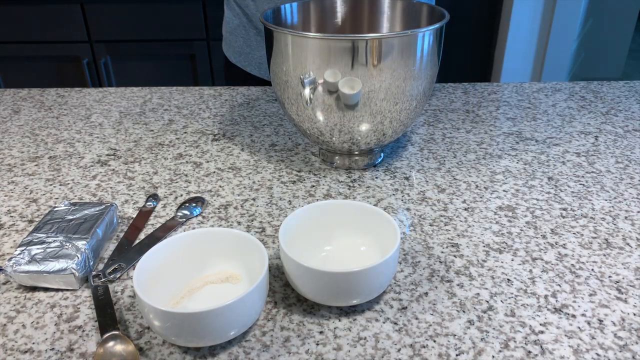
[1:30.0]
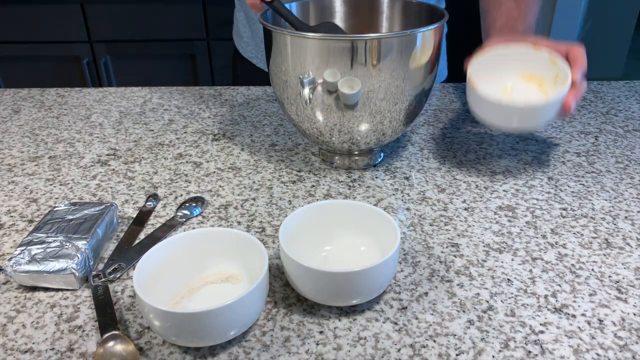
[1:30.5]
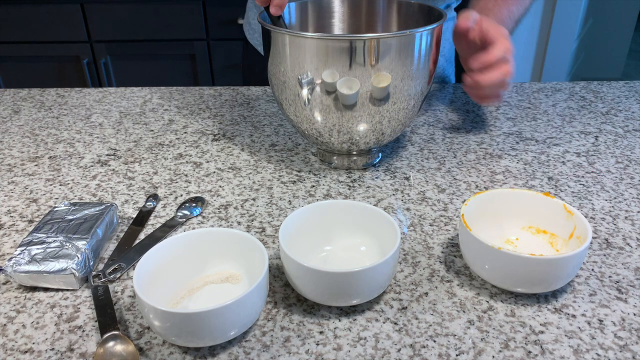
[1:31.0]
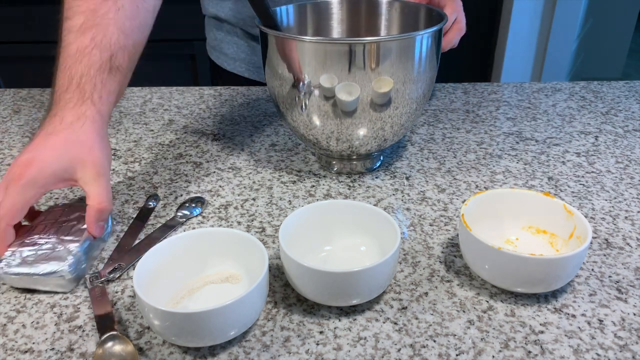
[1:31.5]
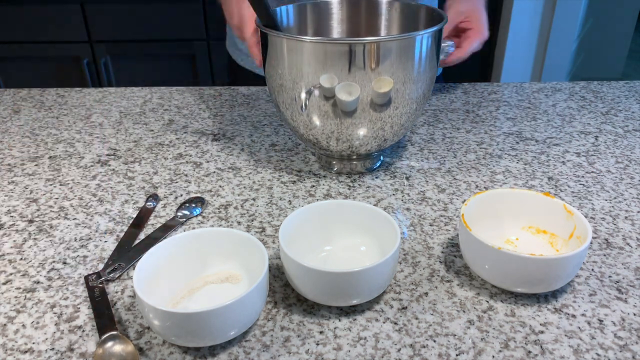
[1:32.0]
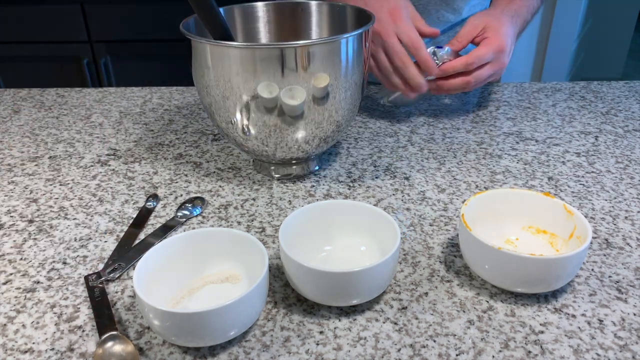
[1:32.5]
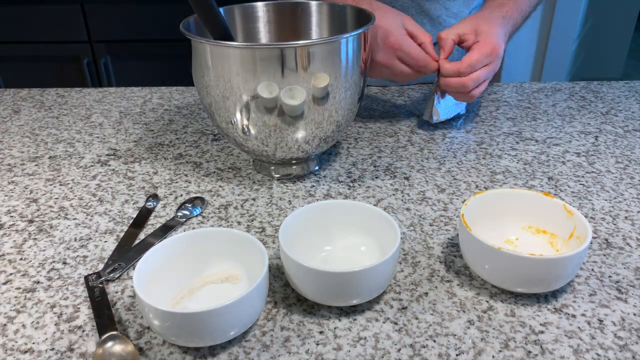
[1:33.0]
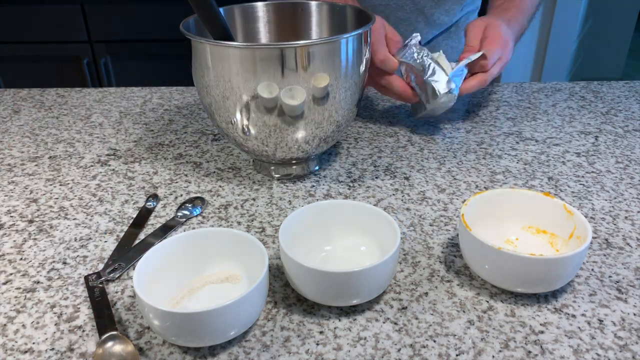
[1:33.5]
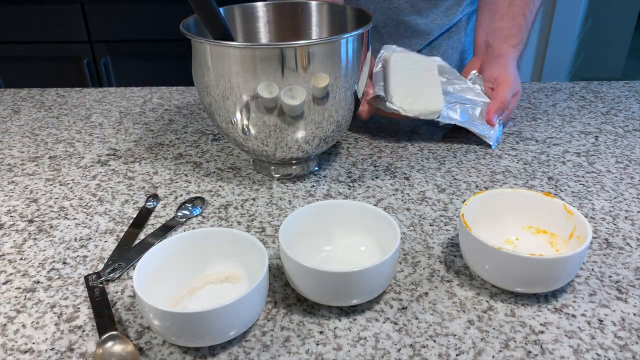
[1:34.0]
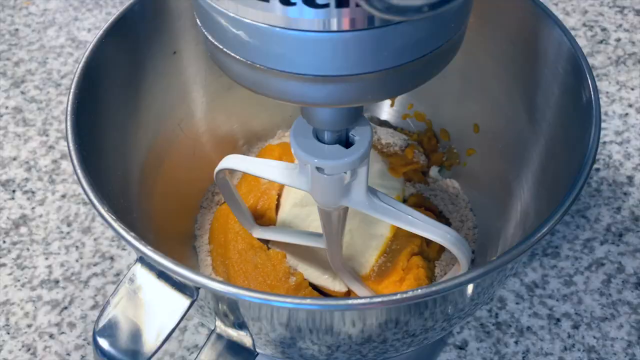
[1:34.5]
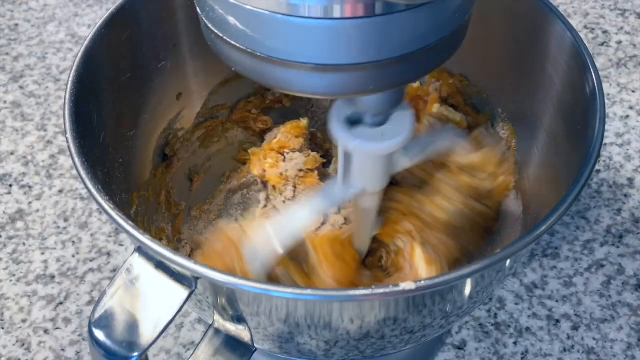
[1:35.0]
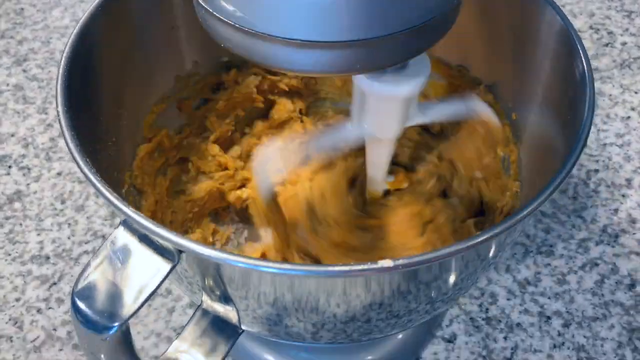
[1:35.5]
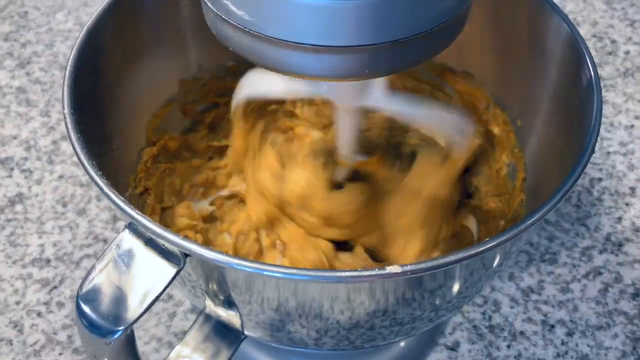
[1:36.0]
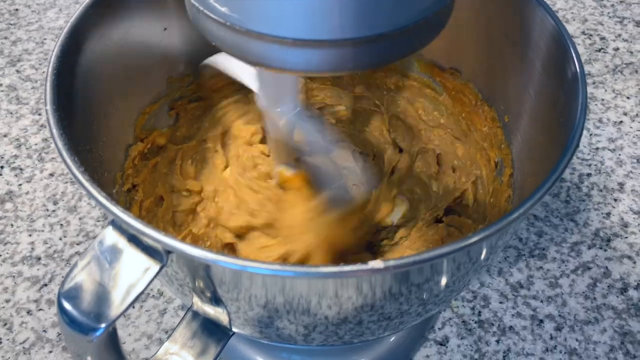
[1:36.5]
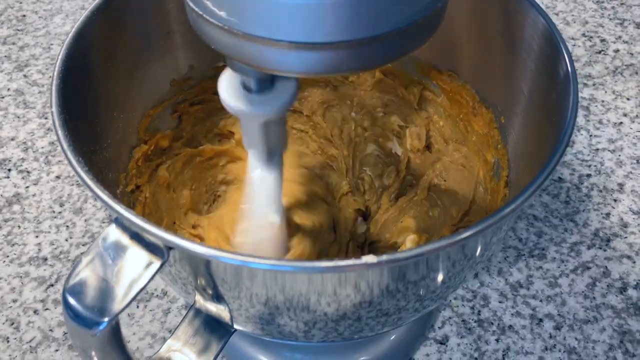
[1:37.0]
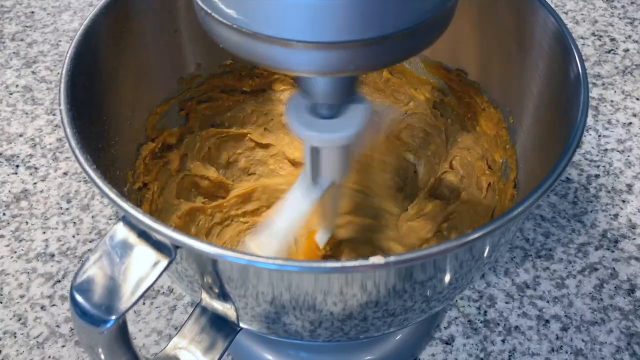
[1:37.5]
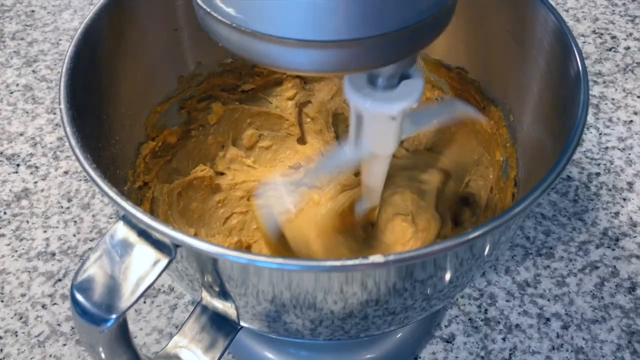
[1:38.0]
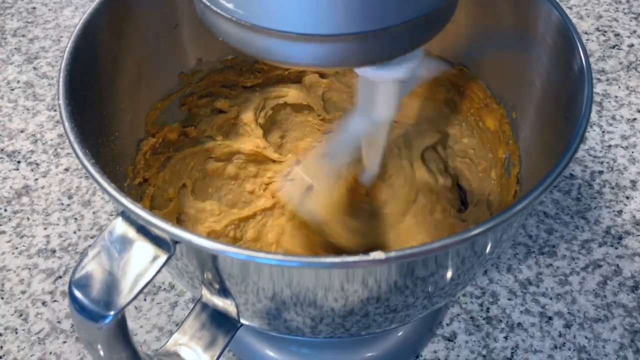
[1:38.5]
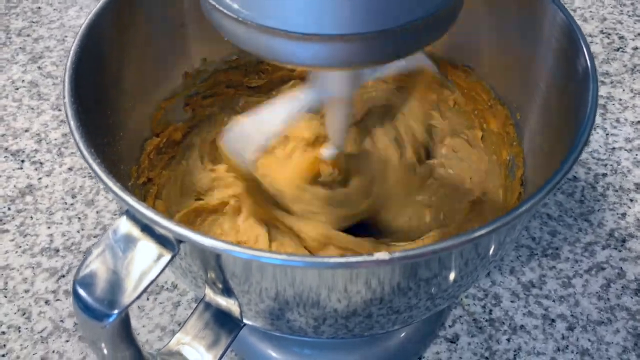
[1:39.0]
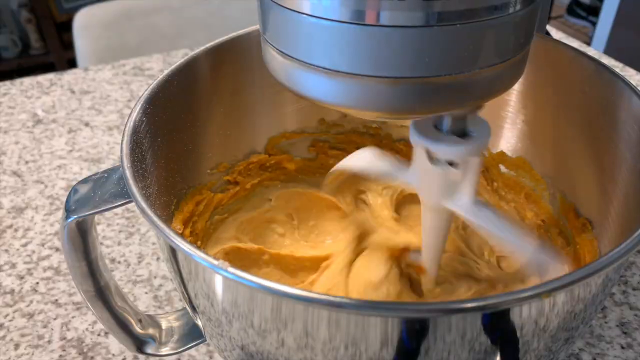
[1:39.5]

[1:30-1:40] Still in the kitchen, two bowls are visible, a white one and the butter, along with the big silver bowl where the mixture has been poured and is being mixed. The man mixes it with a black spatula. He takes the butter and pours it in, then uses a machine mixer, mixing repeatedly until it becomes a creamy brown substance.